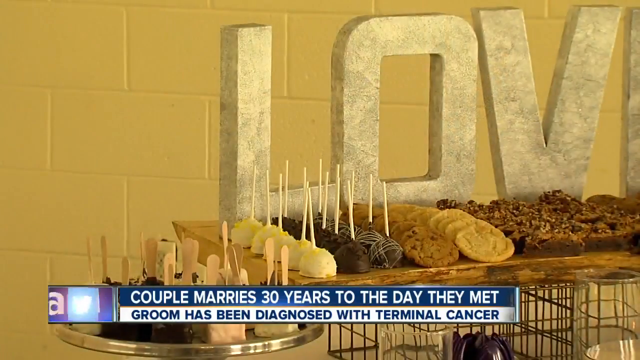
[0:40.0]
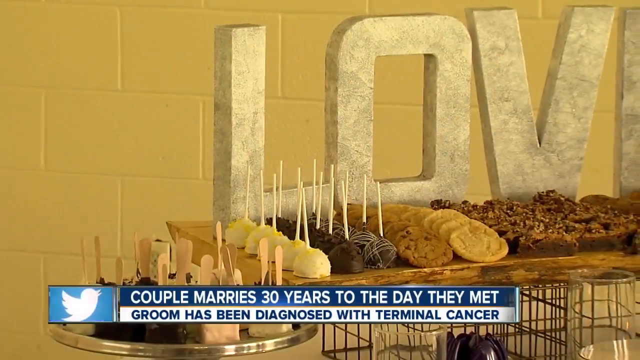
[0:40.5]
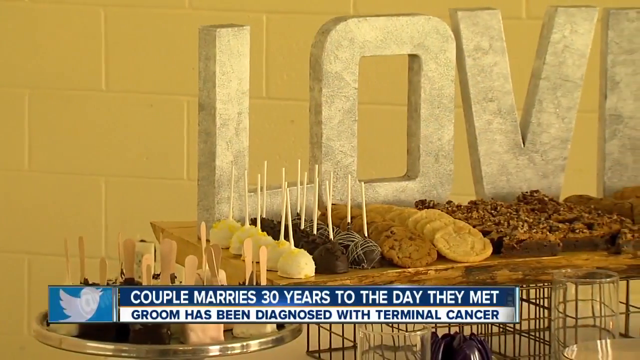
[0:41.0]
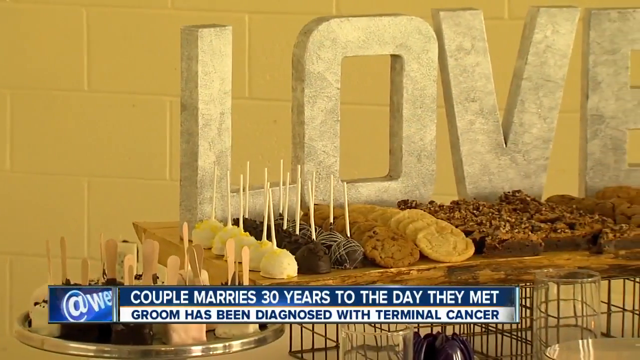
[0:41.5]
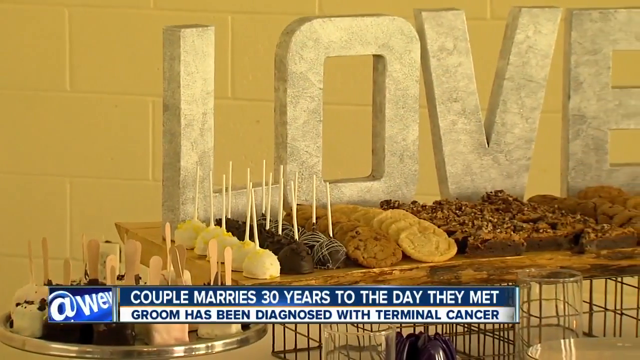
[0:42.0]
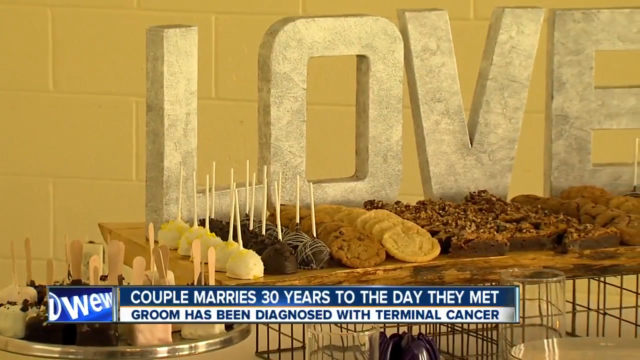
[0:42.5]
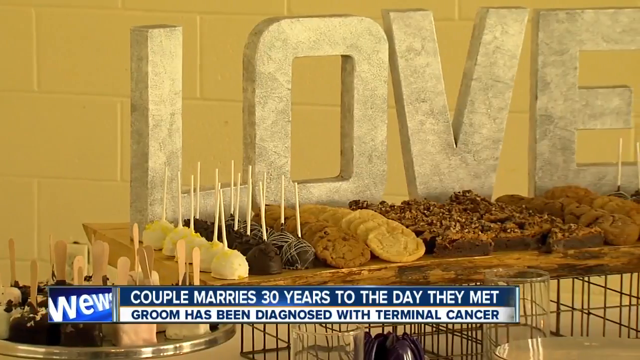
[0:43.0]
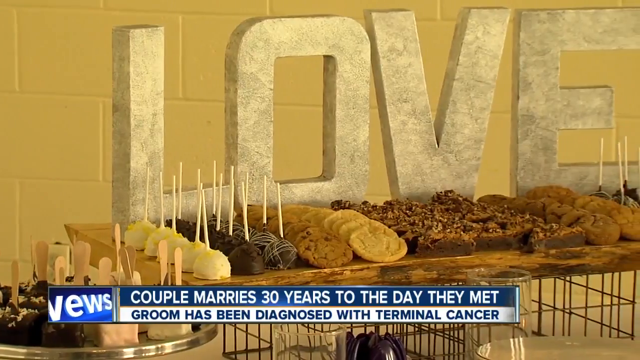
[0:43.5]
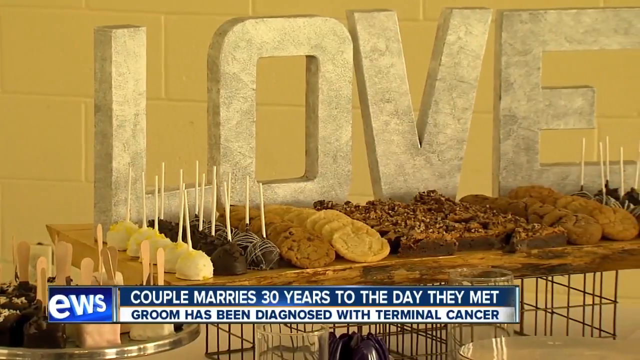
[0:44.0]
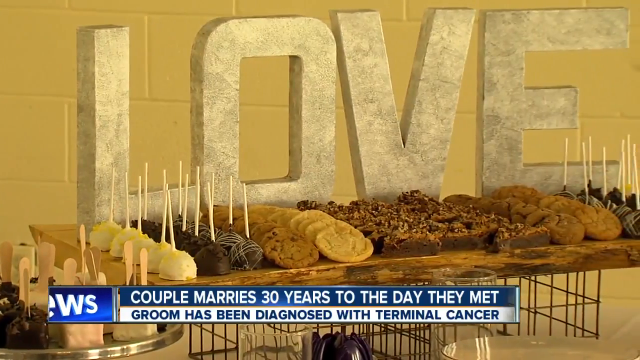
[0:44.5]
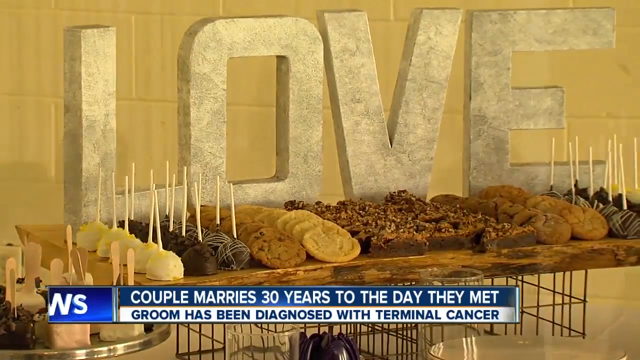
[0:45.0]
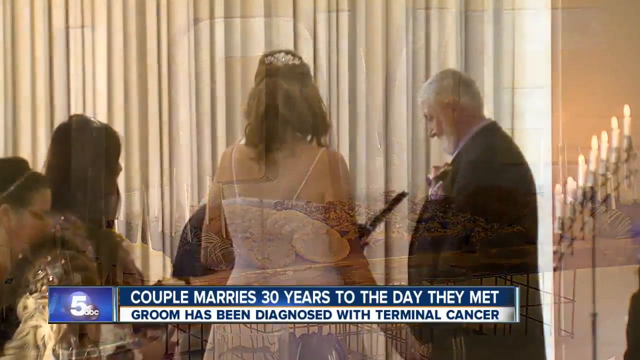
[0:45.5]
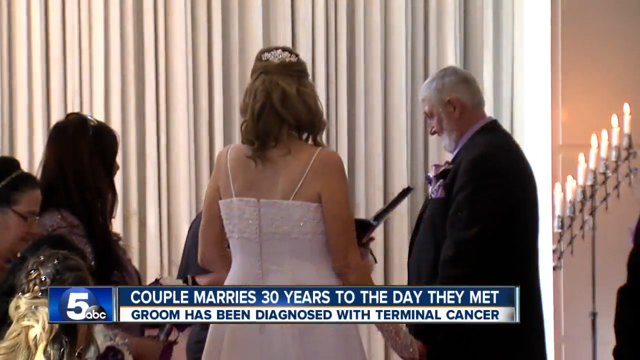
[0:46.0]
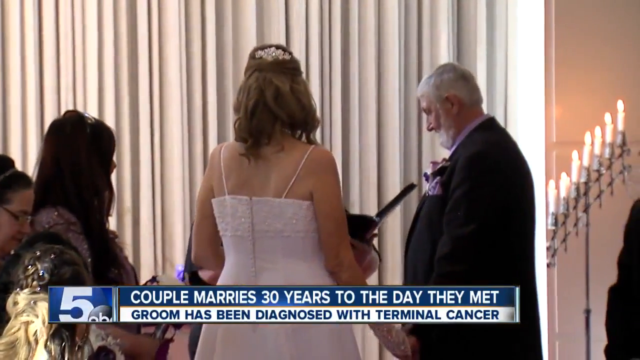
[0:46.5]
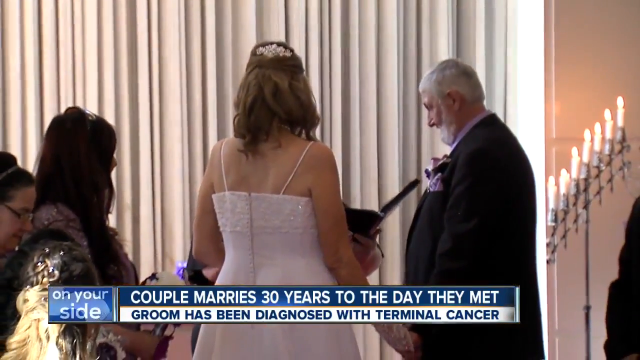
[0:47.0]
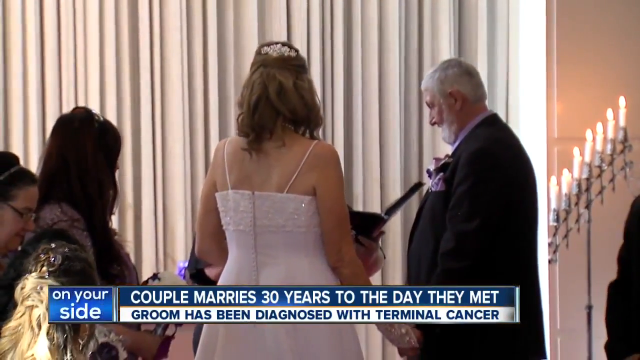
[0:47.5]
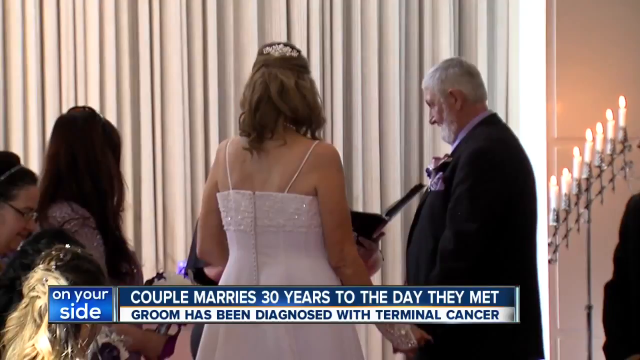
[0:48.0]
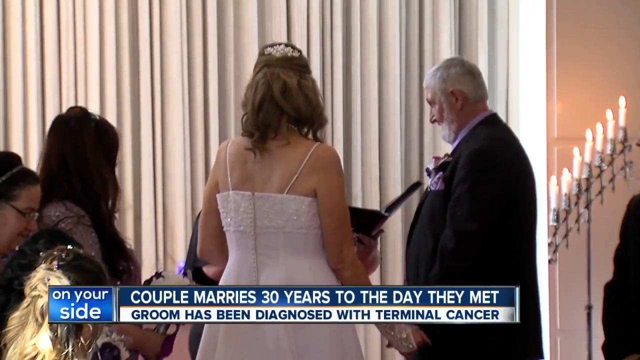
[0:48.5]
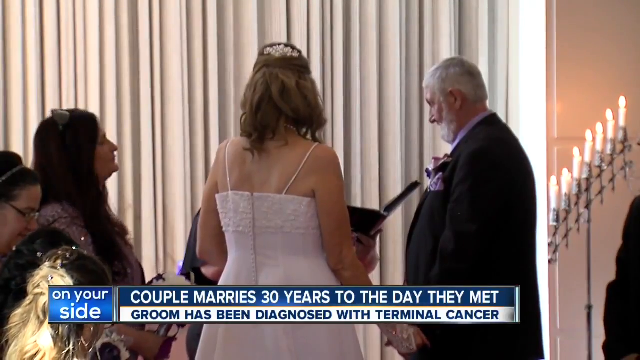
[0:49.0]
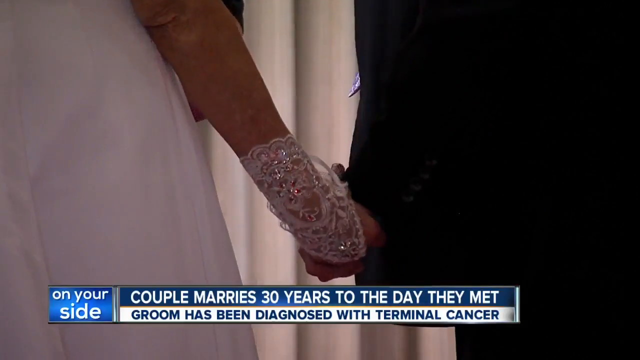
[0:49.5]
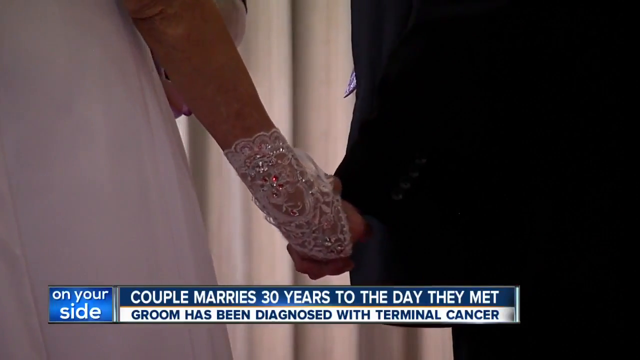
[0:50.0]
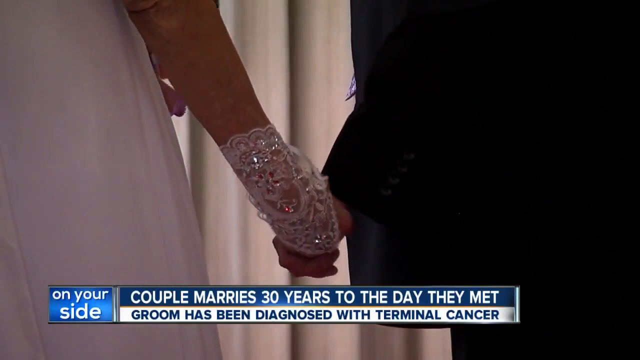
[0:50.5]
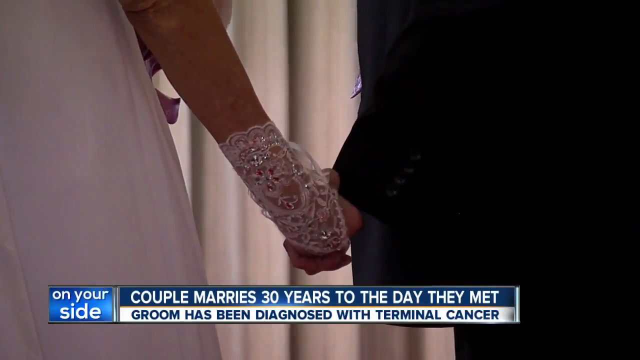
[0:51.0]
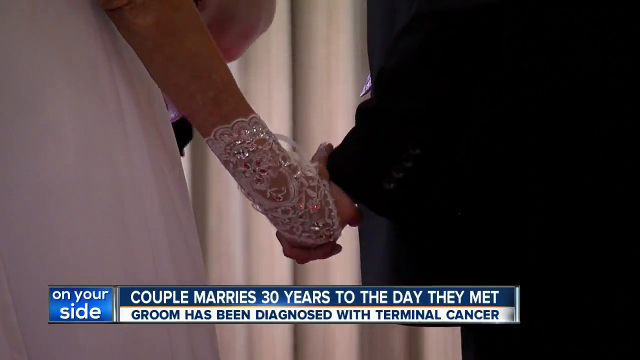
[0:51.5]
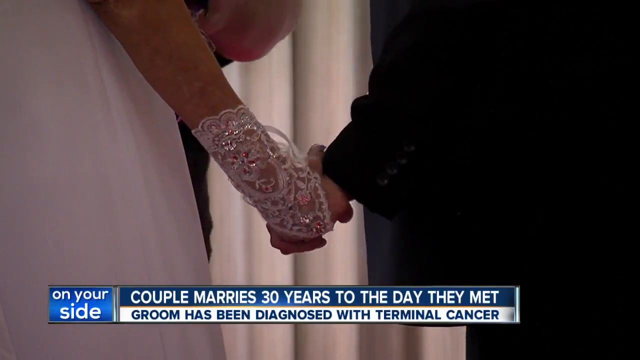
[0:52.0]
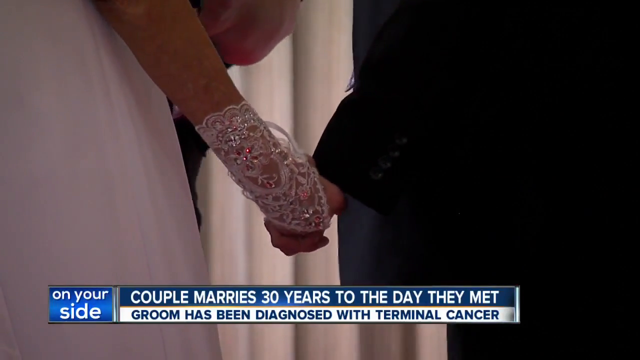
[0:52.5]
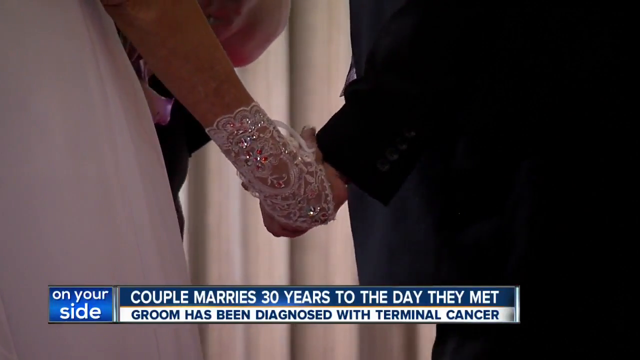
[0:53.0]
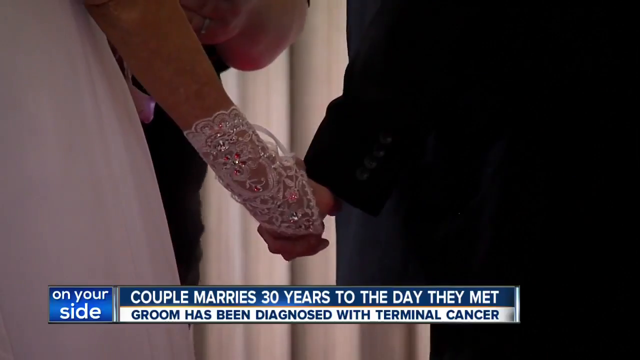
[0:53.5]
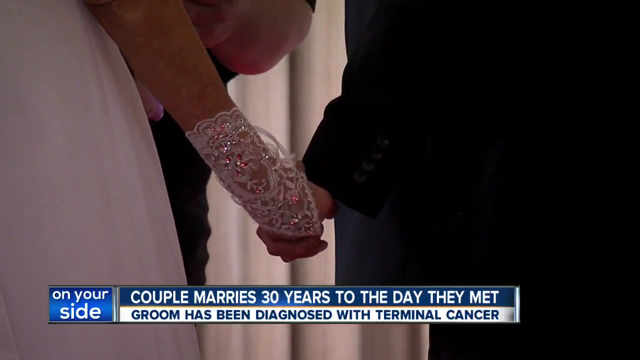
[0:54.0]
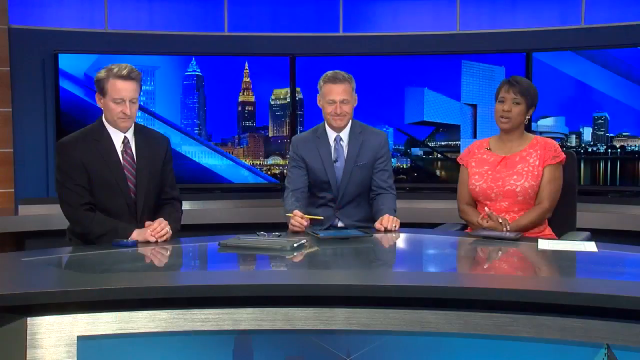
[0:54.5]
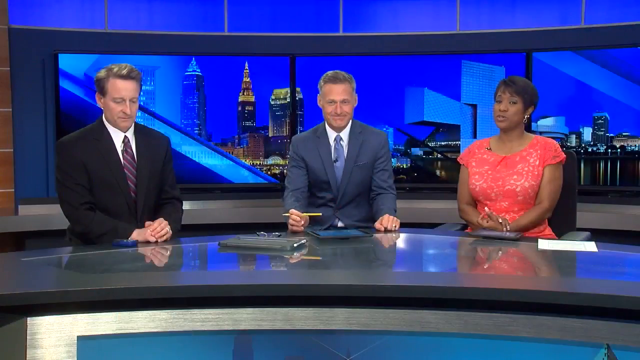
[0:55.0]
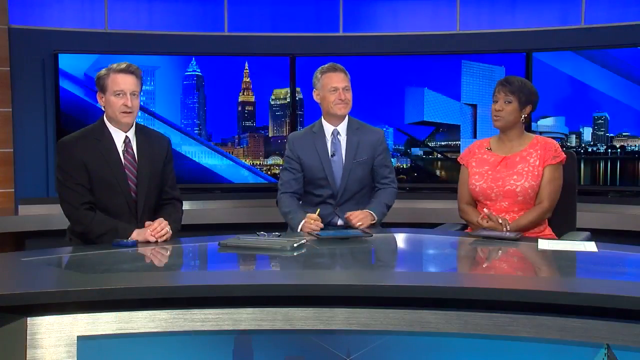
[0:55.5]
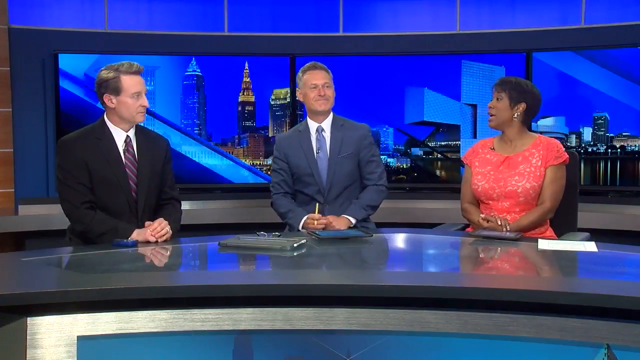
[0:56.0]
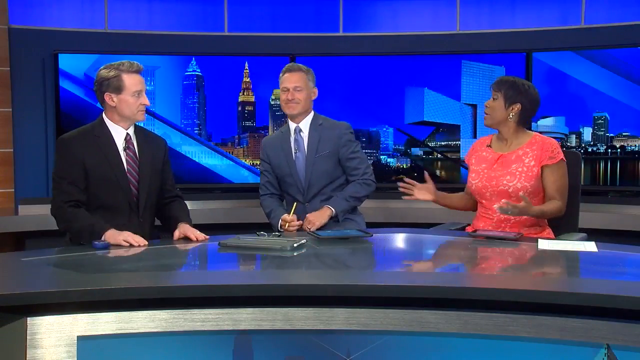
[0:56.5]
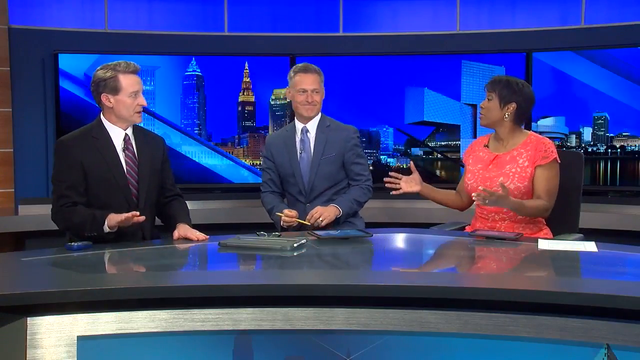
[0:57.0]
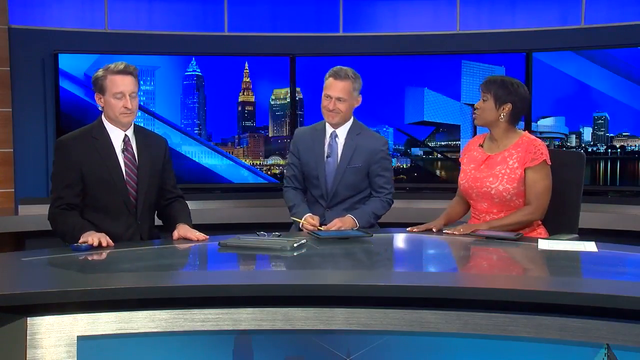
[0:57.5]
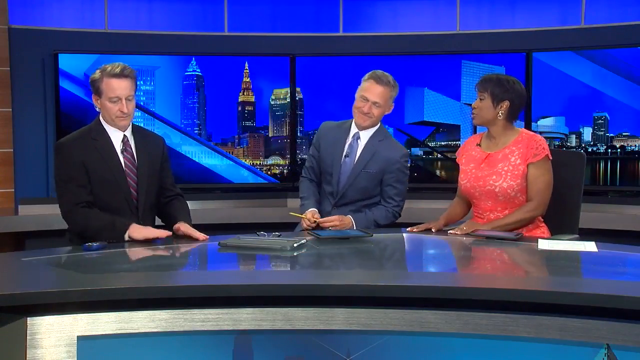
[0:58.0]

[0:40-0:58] Donita Harris wears an orange outfit, and Rob Powers is in the blue suit. On-screen text reads "couple marries 30 years to the day they meet." A husband and wife are shown being asked to sign together, holding each other's hands and enjoying each other's company. At the wedding, they are checking the biscuits, and friends and family come around to support them.